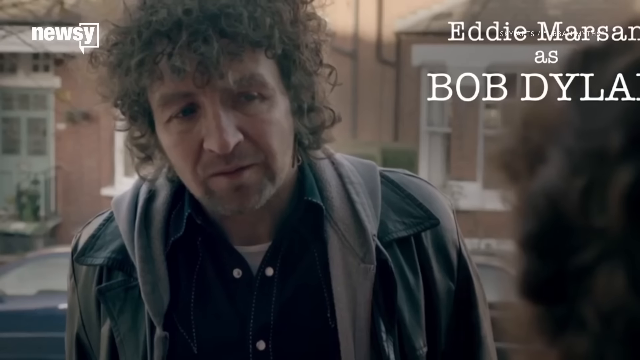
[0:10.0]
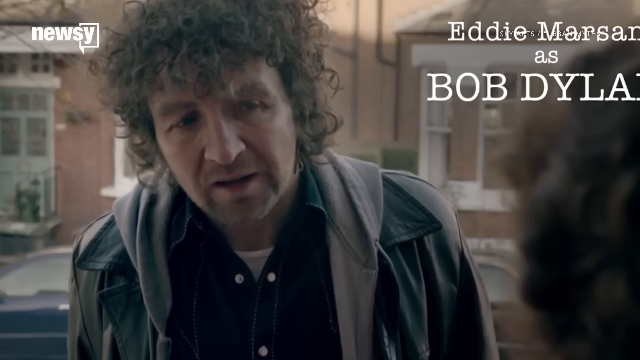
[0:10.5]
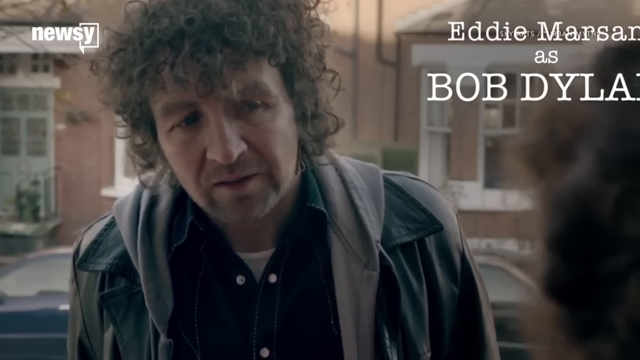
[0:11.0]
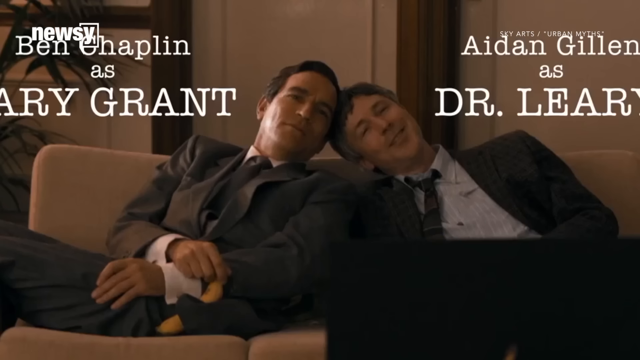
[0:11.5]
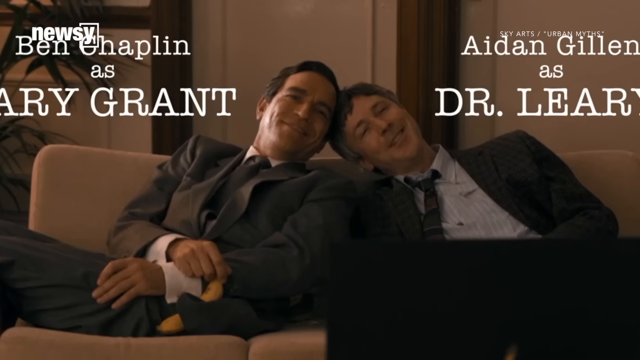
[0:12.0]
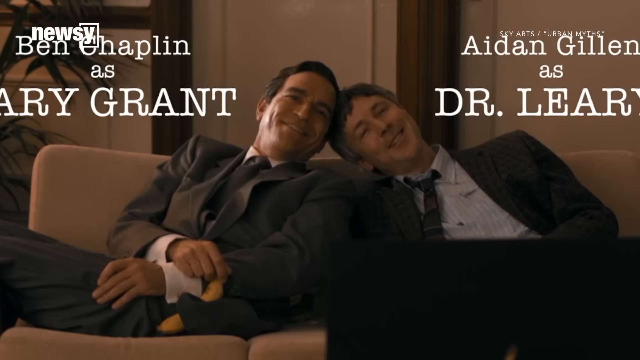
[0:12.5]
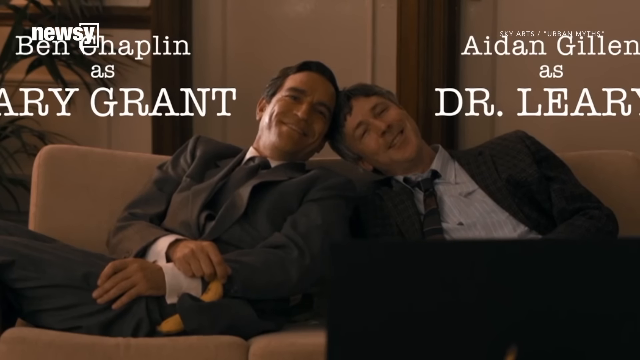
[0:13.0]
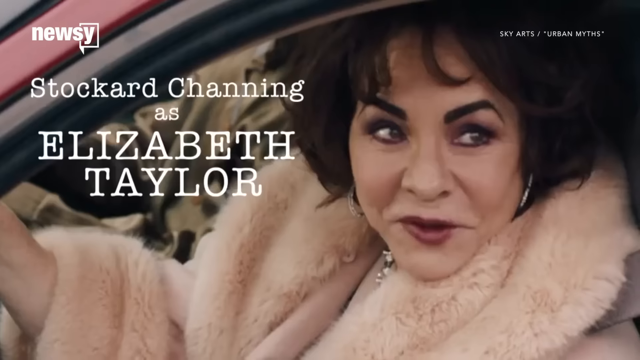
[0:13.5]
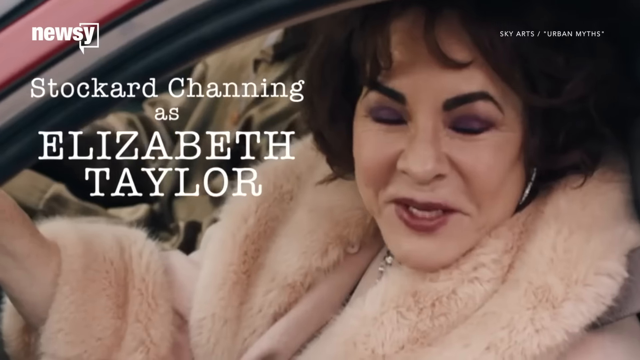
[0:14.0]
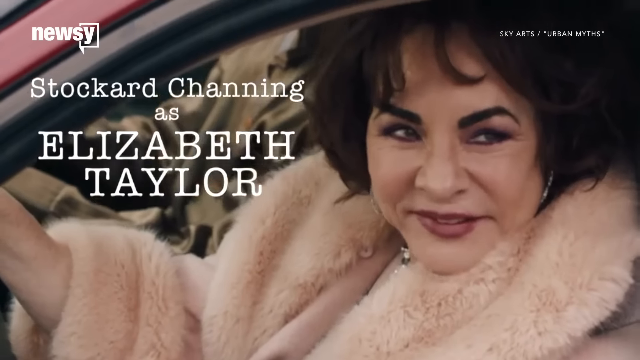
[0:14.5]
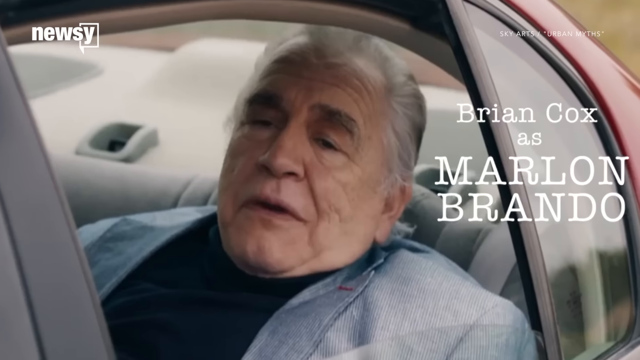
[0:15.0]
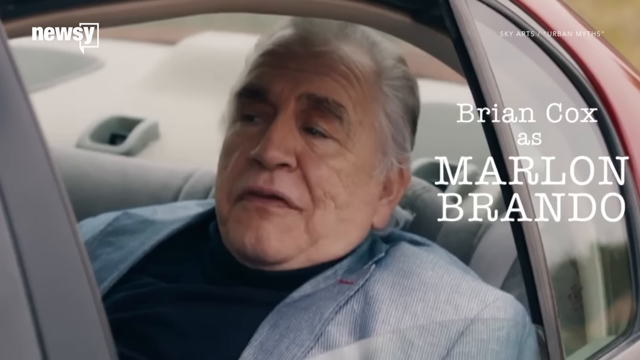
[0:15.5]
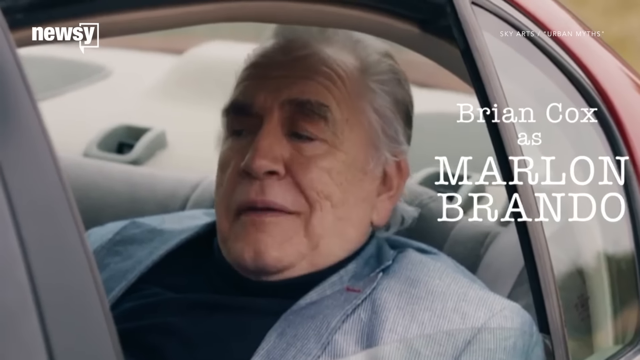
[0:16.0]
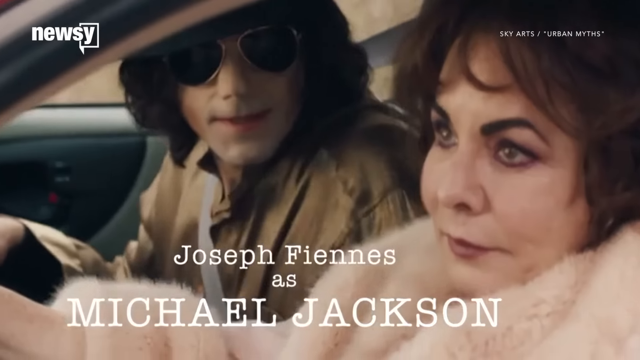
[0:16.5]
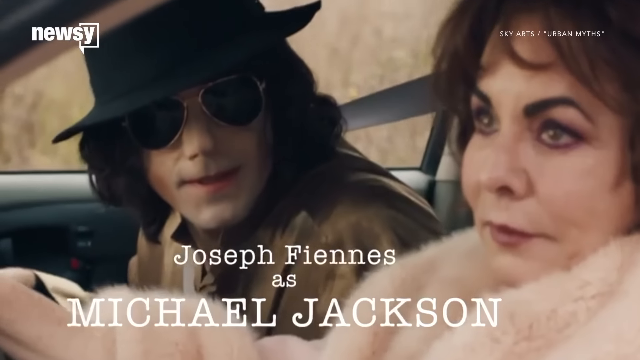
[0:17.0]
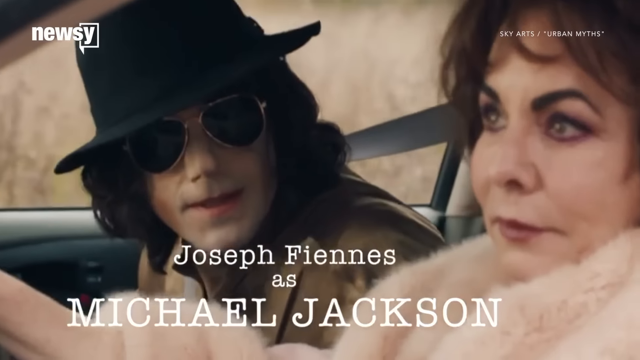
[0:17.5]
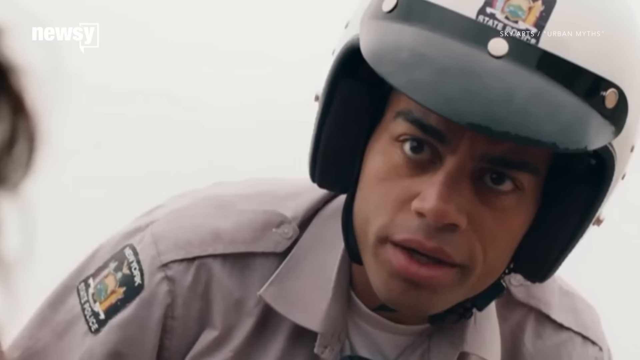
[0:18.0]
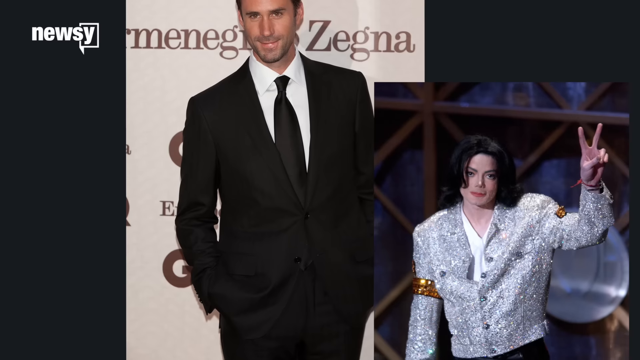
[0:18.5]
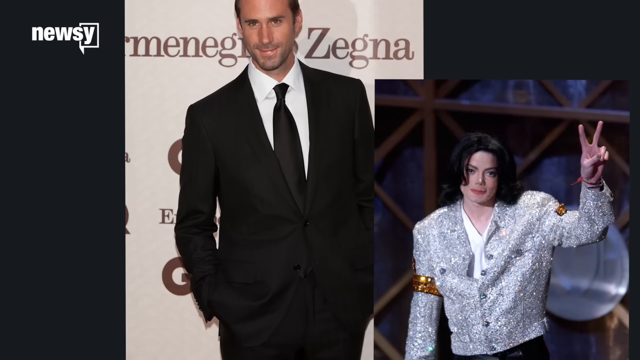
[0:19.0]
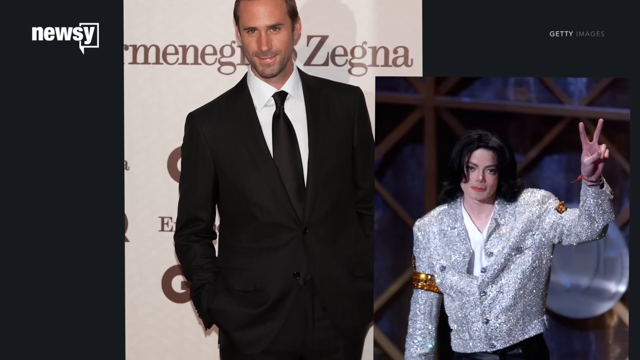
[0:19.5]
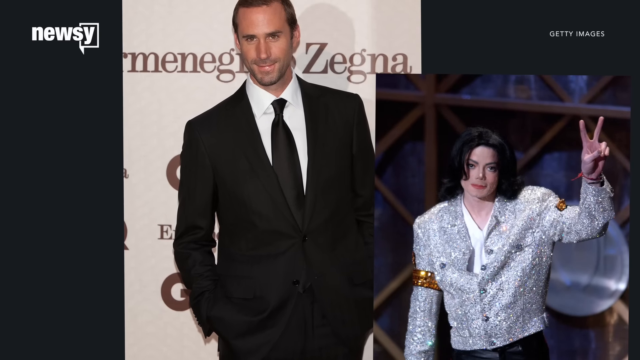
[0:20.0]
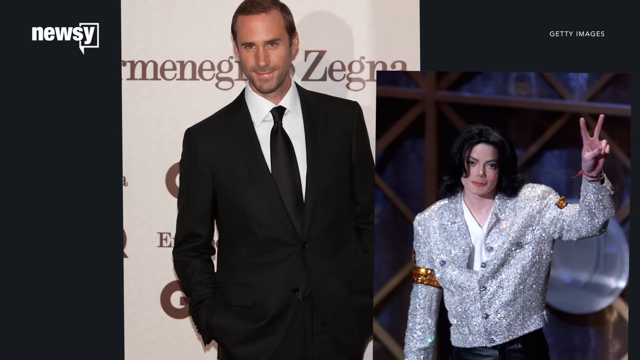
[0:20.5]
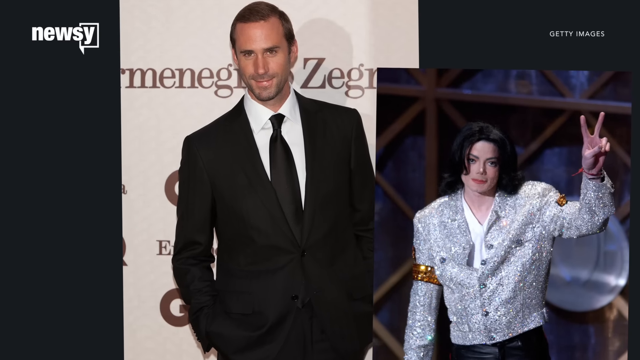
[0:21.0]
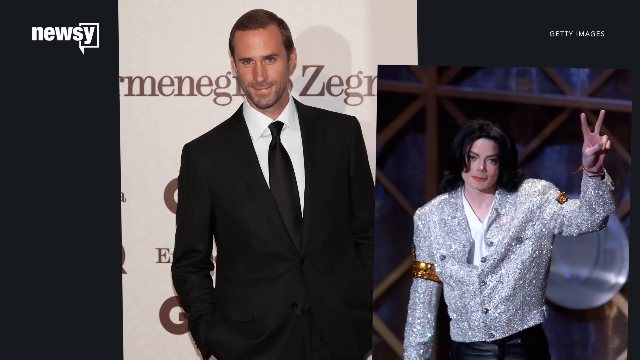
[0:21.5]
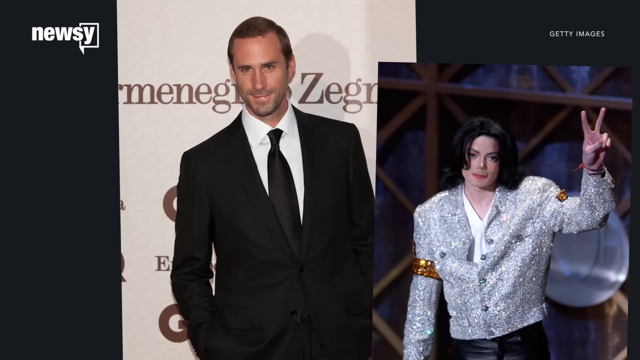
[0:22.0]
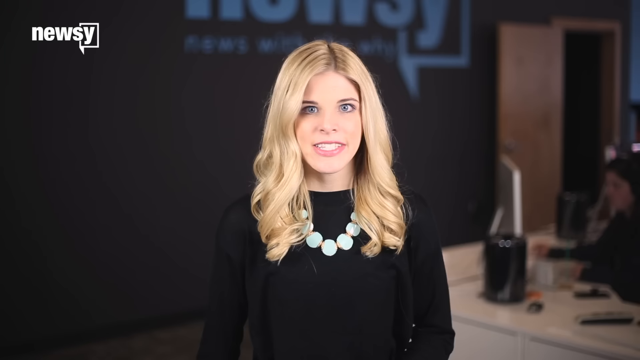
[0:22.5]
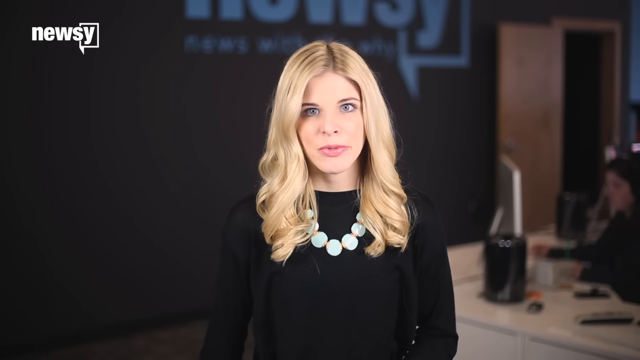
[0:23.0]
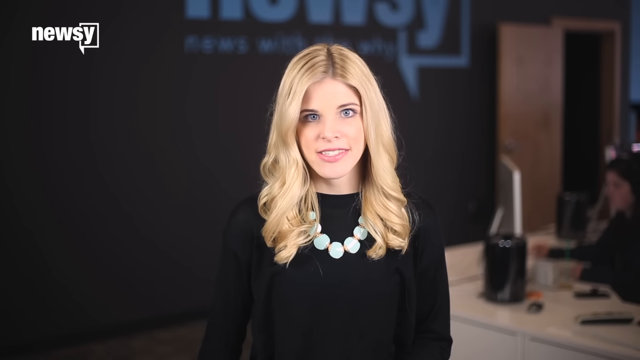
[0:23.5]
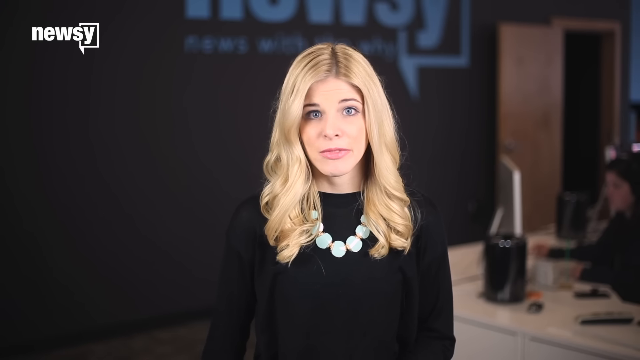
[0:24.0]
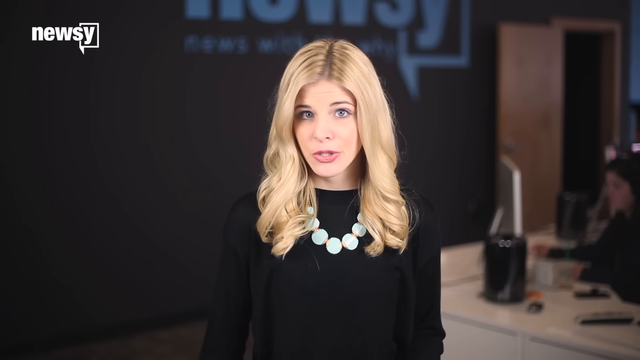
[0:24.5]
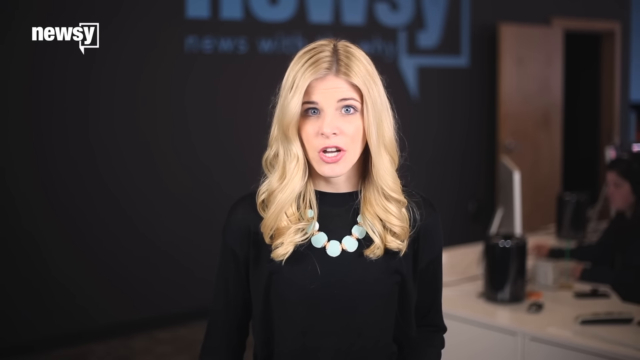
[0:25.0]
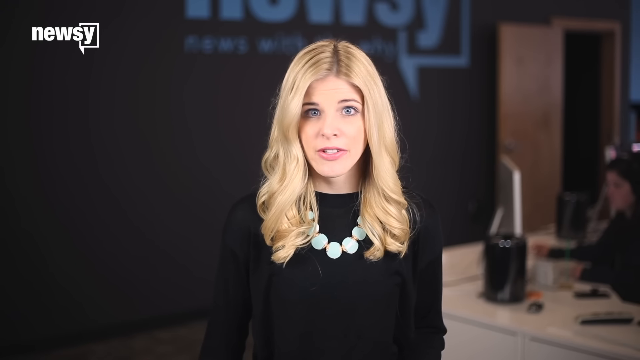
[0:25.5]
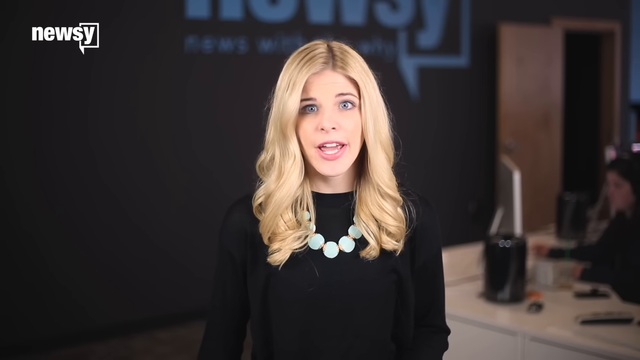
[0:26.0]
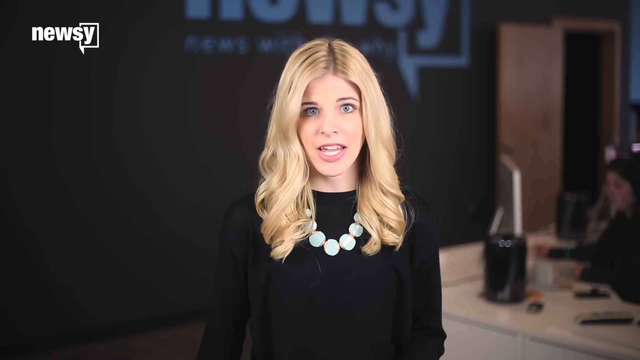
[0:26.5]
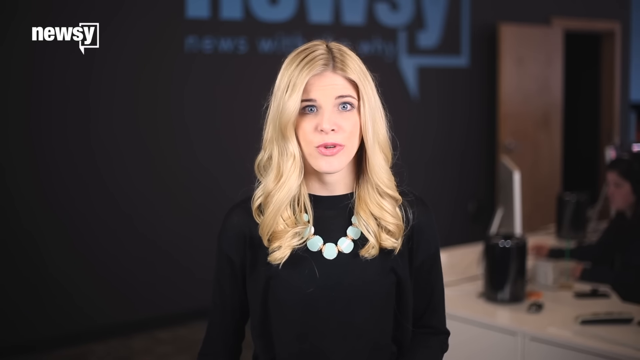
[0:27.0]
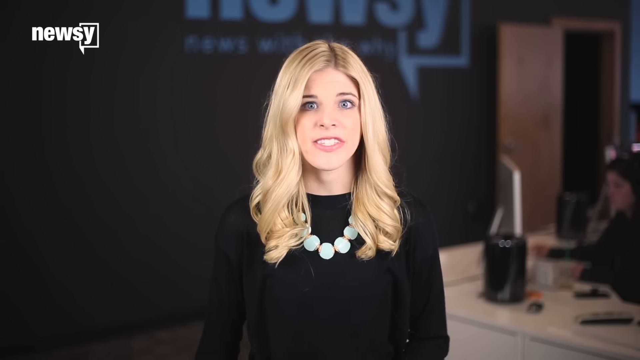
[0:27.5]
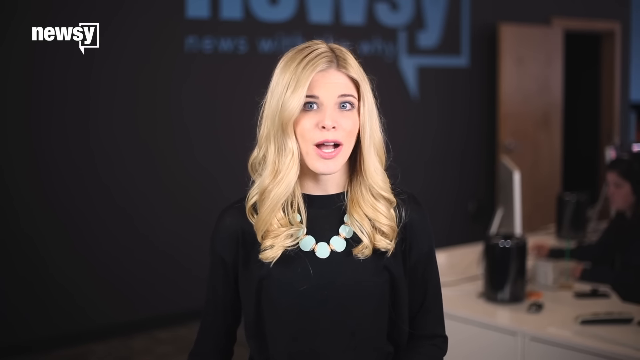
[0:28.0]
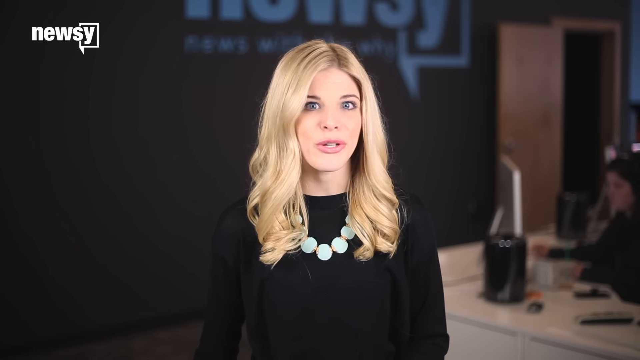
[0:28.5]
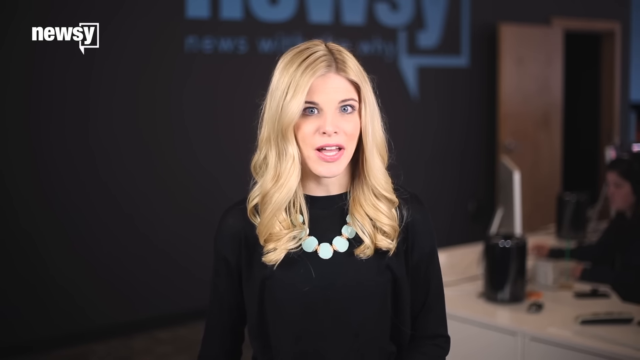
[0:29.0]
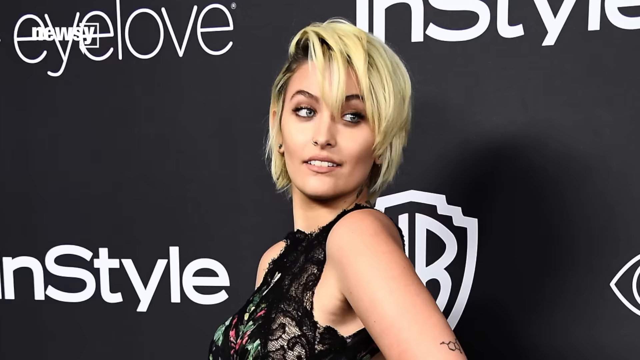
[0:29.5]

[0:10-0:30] The curly-haired man stands outside the door, wearing a black jacket and a black shirt with a white vest underneath. Text in the top right of the screen reads "Eddie Marston is Bob Dylan." Two men in suits are shown with their heads locked together, and on-screen text names Ben Chaplin and Cary Grant and mentions Dr. Leary; the men are seated on a couch. An image follows of a brunette woman in a full coat with bangles in her hair, with text reading "Stockard Channing as Elizabeth Taylor." In the top right, "Sky Arts, Urban Myths" is written in white. In the back of a vehicle painted red sits a bulky man with gray hair in a light blue suit and a black T-shirt; he looks like a mobster. Text reads "Brian Cox as Marlon Brando." A man in the front passenger seat leans forward; he wears a bowler hat, sunshades and a seatbelt, and has flowing black hair. Text reads "Joseph Fiennes as Michael Jackson." An officer leans forward, wearing a white and black helmet that says "State Police" and what looks like a light gray shirt. The video transitions to a man in a dark suit, white shirt and black tie, with a poster behind him that says "Zegna." An image shows Michael Jackson in a sequined silver dress with flowing black hair, holding up a peace sign, with "Getty Image" in the top right of the screen. The video returns to the blonde newscaster in the white necklace and black dress, her lips moving.